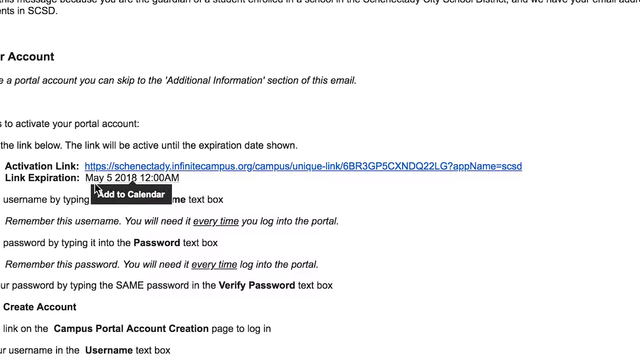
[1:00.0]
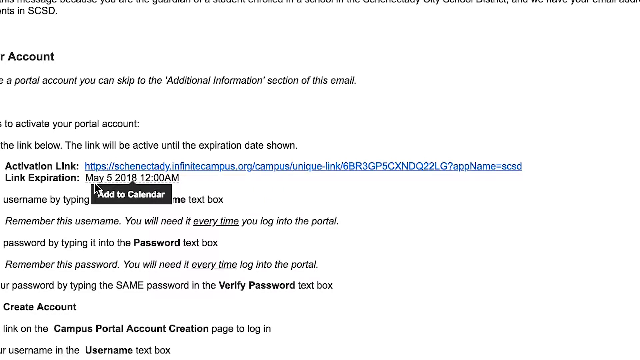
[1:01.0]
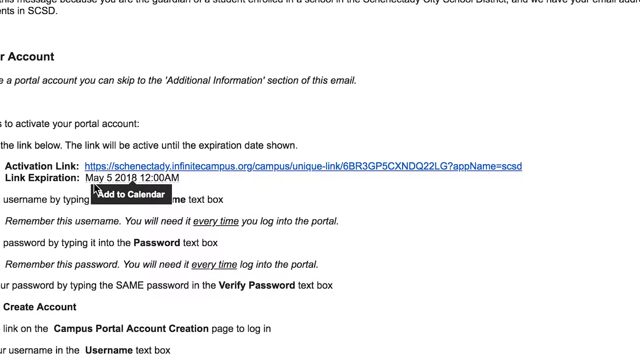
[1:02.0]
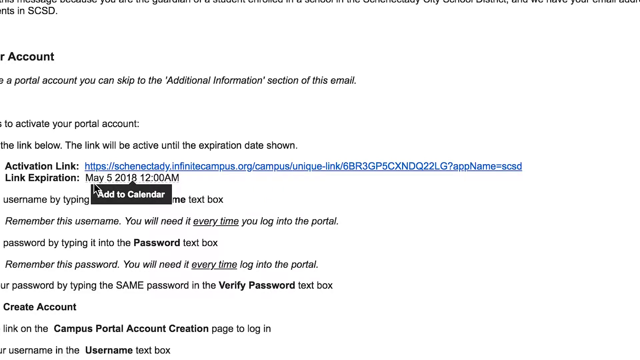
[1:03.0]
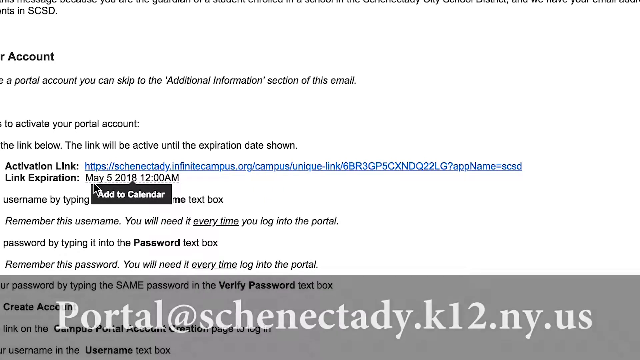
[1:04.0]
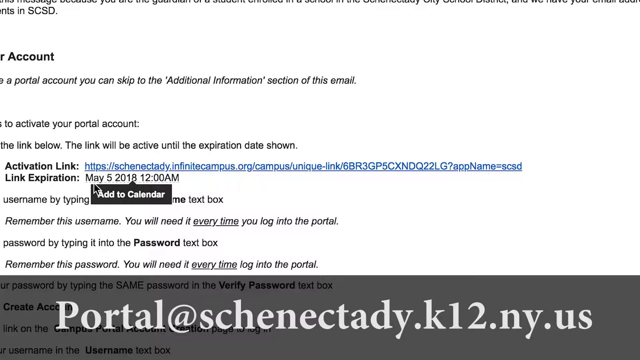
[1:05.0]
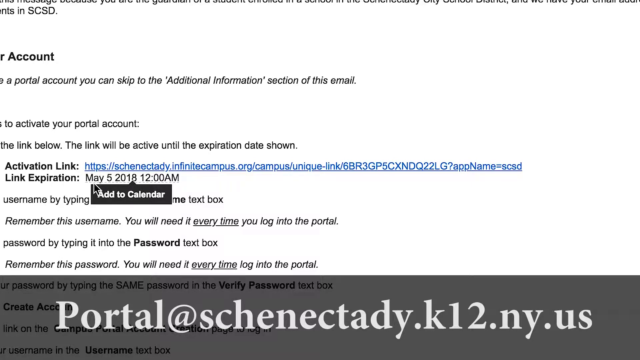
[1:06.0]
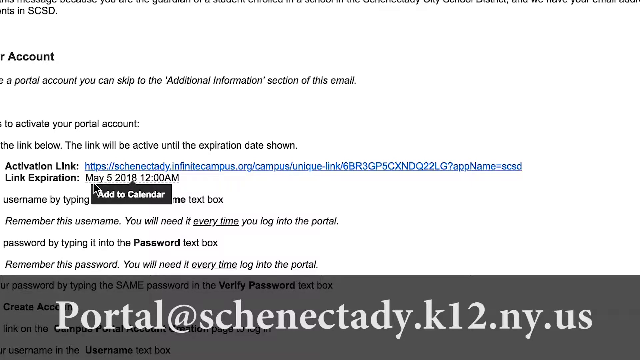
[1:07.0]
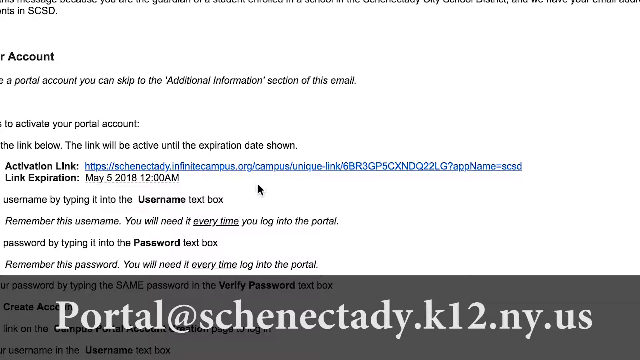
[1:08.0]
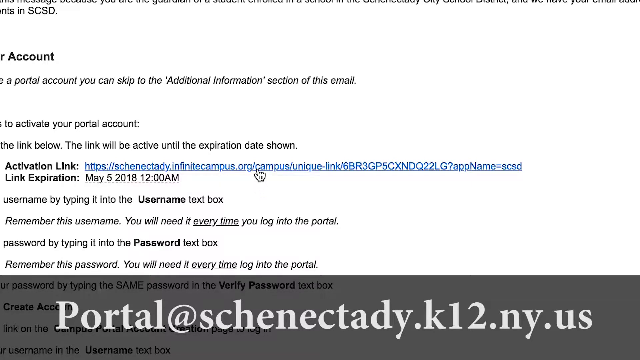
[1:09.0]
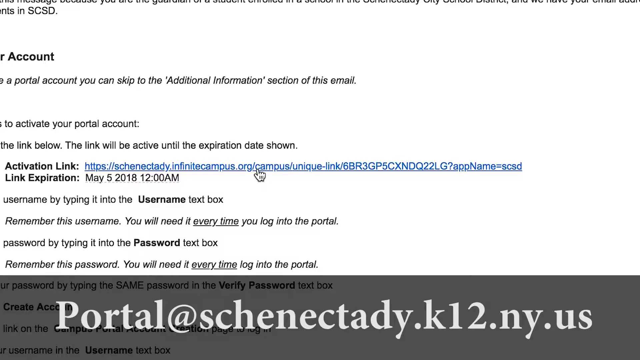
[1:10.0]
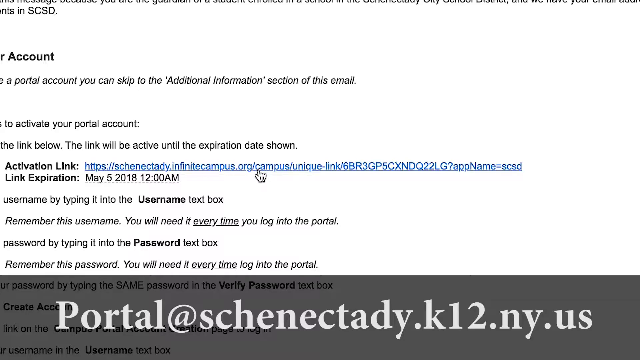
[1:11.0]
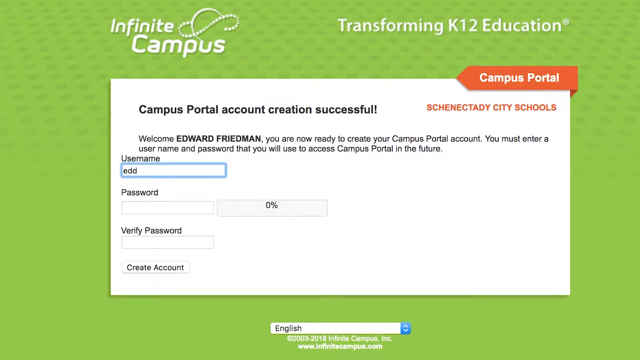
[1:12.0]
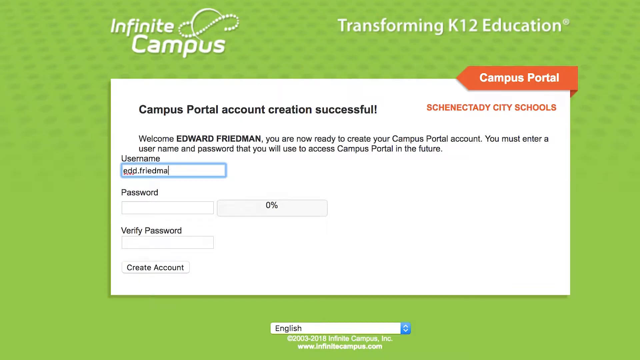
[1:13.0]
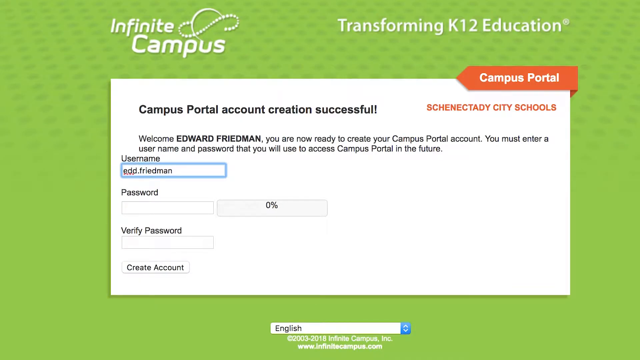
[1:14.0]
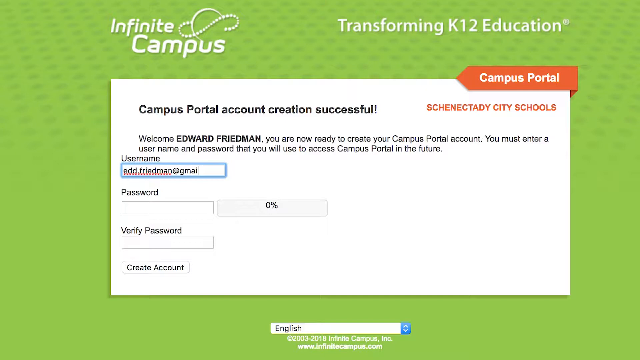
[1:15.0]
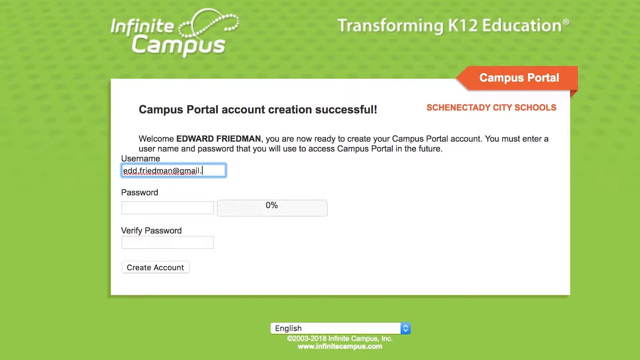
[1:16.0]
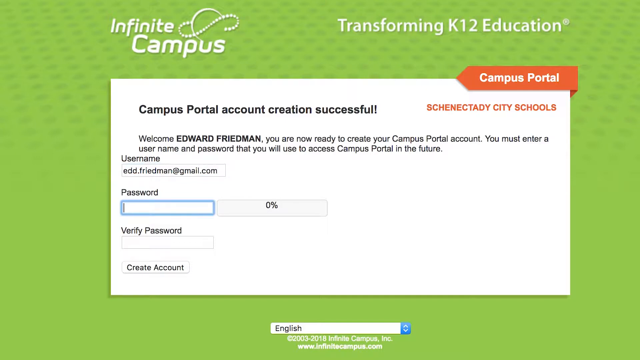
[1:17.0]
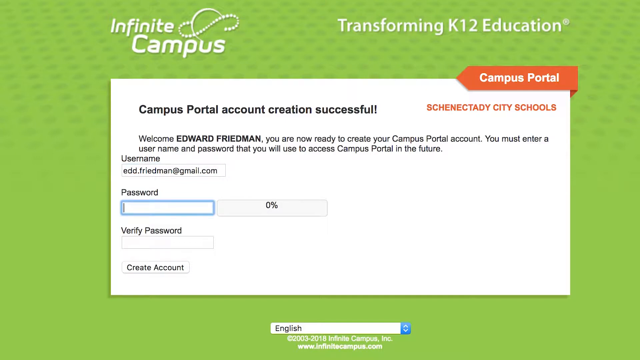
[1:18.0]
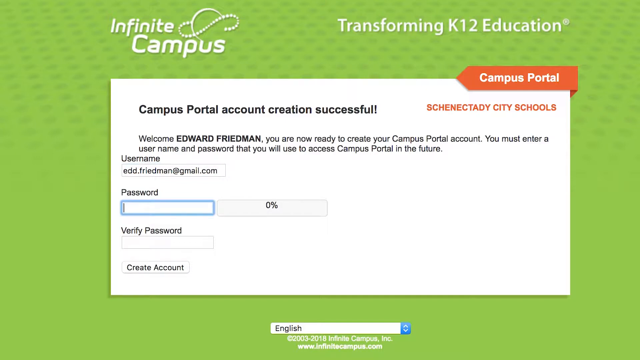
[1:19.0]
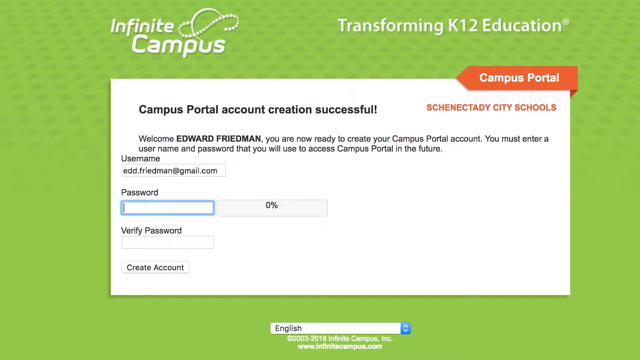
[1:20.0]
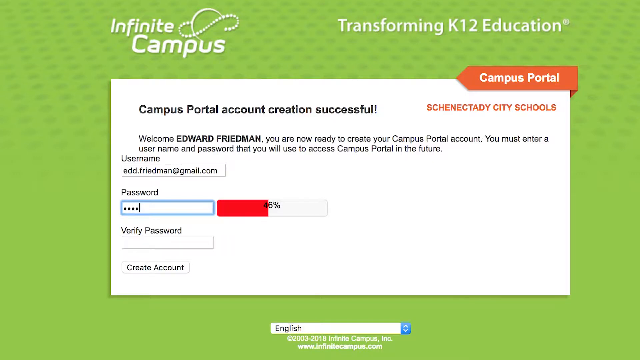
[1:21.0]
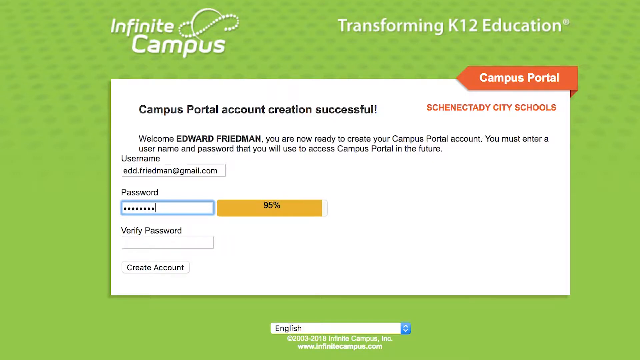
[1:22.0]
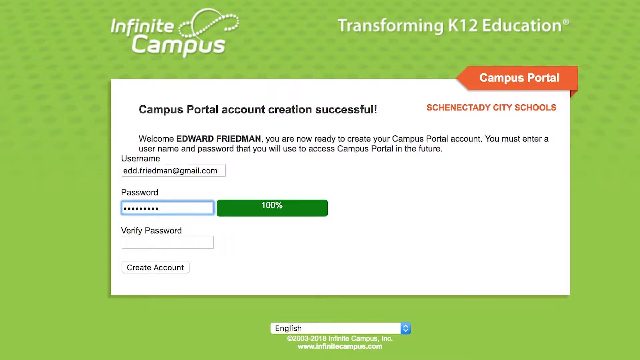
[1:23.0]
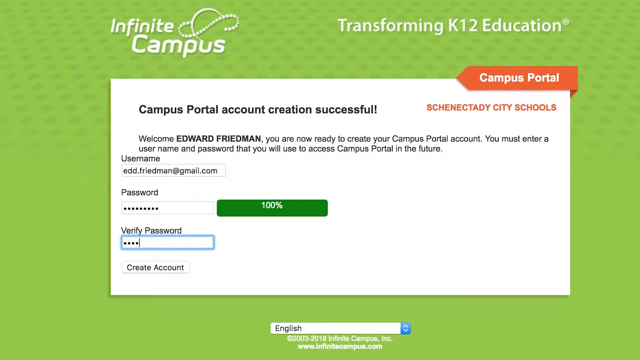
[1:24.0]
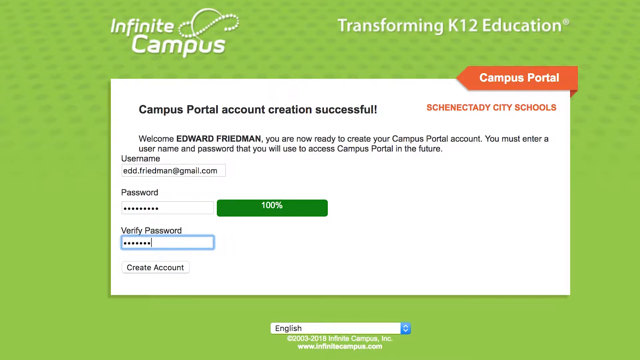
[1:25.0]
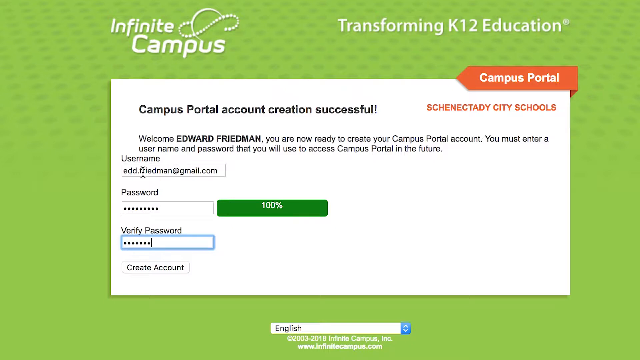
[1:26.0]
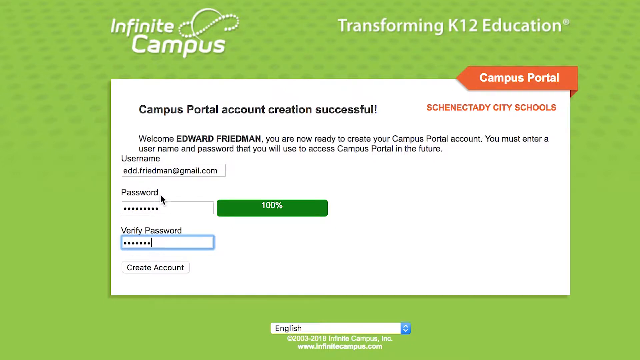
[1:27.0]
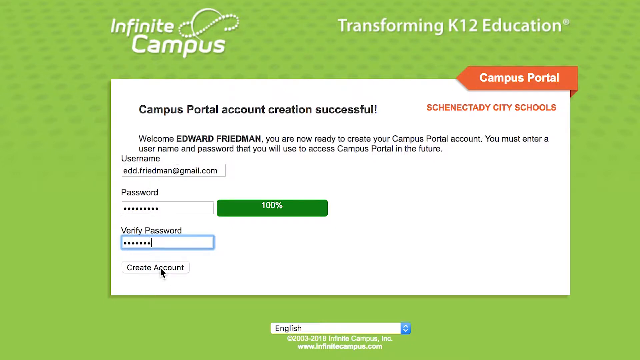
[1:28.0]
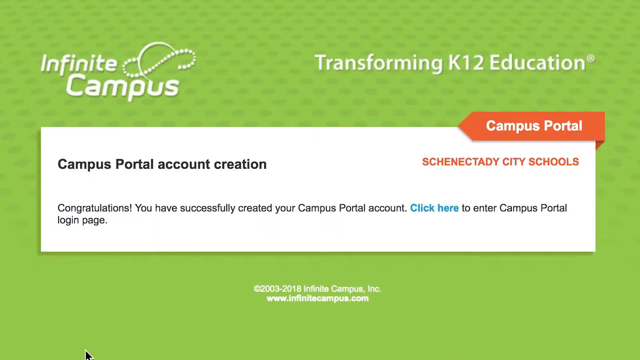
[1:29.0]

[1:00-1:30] A computer screen is filled with information. It says "activation link," and to the right is the link "https://SHENDECTADY.infinitecampus.org/campus/unique-link/6BR3GP5CXNDQ22LG?Appname=SCSD." Below that is a date: "link expiration," with "May 5th 2018 12 a.m." On a little black tab below that it says "add to calendar" in white letters; the rest of the writing on the screen is black. A little black or gray see-through banner pops up across the screen with white letters reading "portal at SCATNECTADI.us." The mouse pointer goes up to the link and hovers just under "campus." The view then switches to a screen with a green background at the top left. In the center is a white rectangle whose top and bottom are longer than its sides. Above it on the left it says "Infinite Campus," and to the right "Transforming K-12 Education." At the top right of the white rectangle it says "Campus Portal" on a red banner, with "SCHENECTADY City Schools" below. To the left it says "Campus Portal Account Creation Successful," and below that "Welcome Edward Friedman. You are now ready to create your Campus Portal account. You must enter a username and password that you'll use to access Campus Portal in the future." Below that is a username box that the person is typing in, then "Password" with a box and "0%" to the right, then "Verify Password," then "Create Account." The text typed in the username box is "EDV.FRIEDMAN," followed by "@gmail.com." The cursor goes down to the password box, where the little line blinks, and the password is typed; the 0% fills up to 100%. It goes down to Verify Password and verifies it. The pointer then goes down to Create Account, the account is created, and a different page appears.